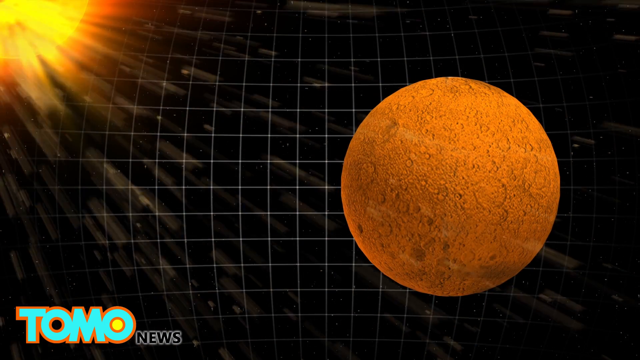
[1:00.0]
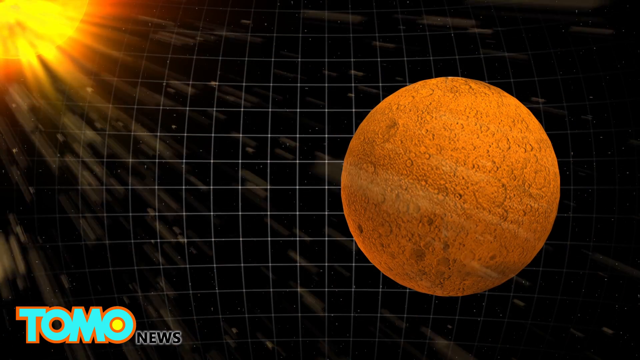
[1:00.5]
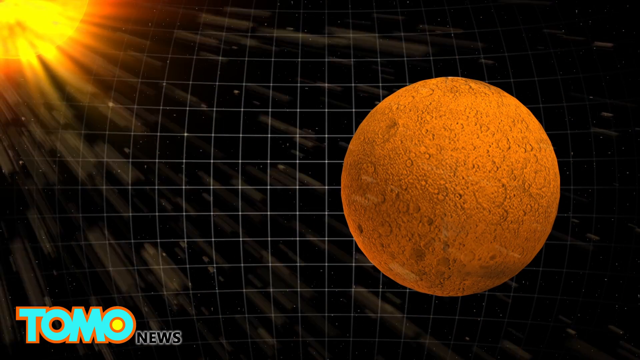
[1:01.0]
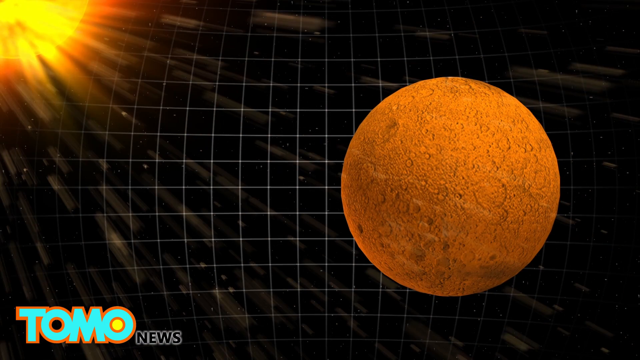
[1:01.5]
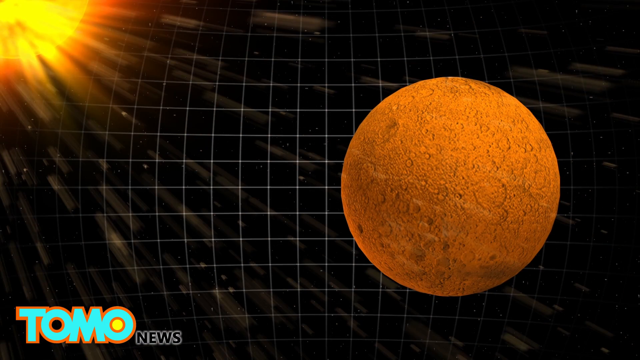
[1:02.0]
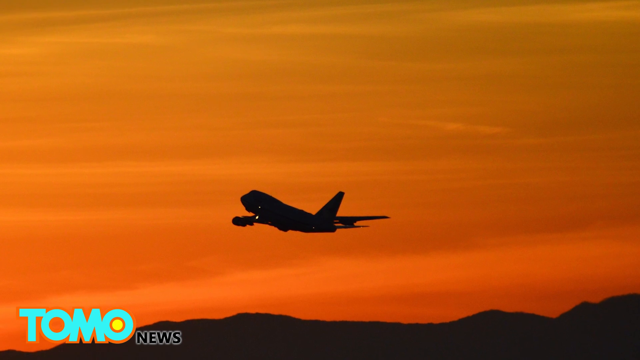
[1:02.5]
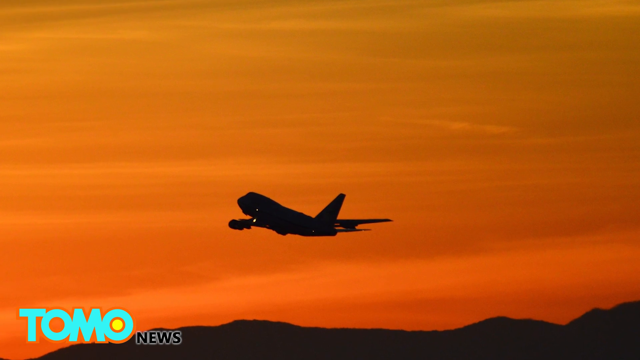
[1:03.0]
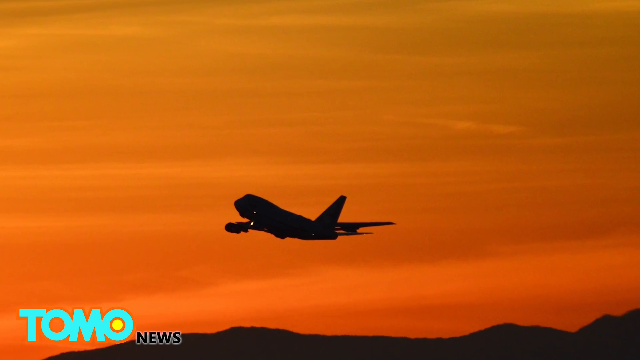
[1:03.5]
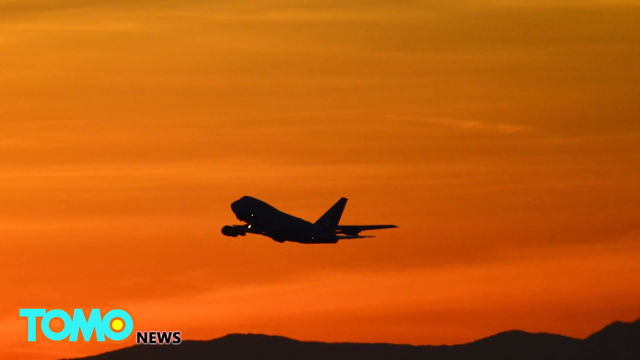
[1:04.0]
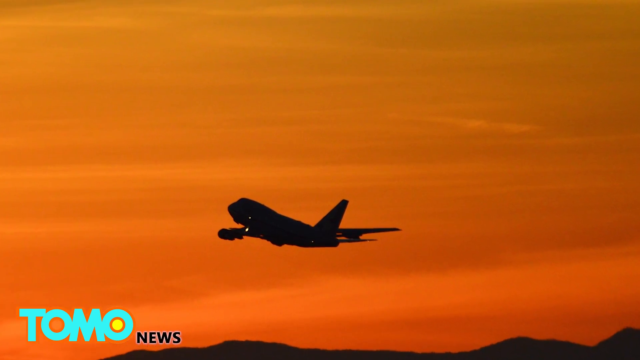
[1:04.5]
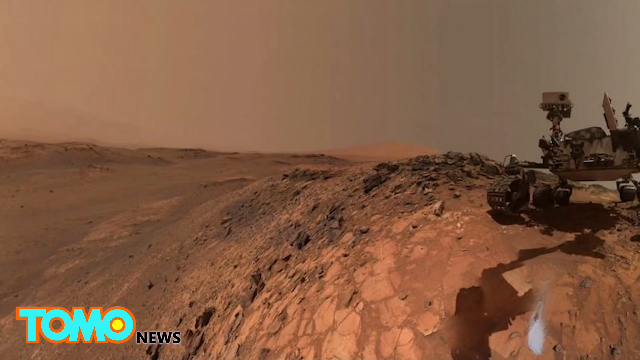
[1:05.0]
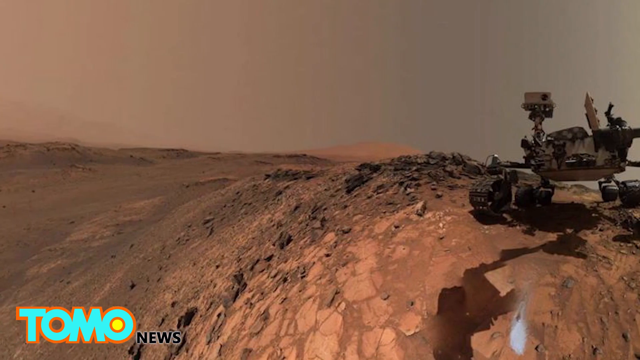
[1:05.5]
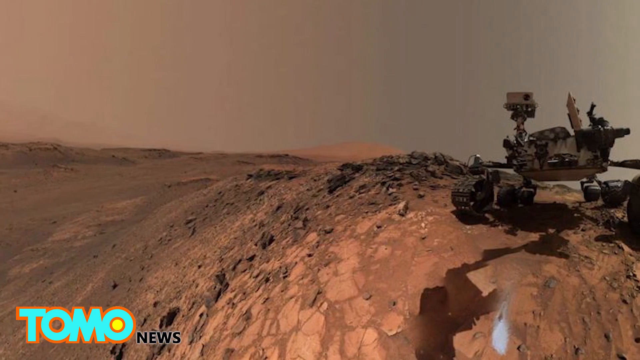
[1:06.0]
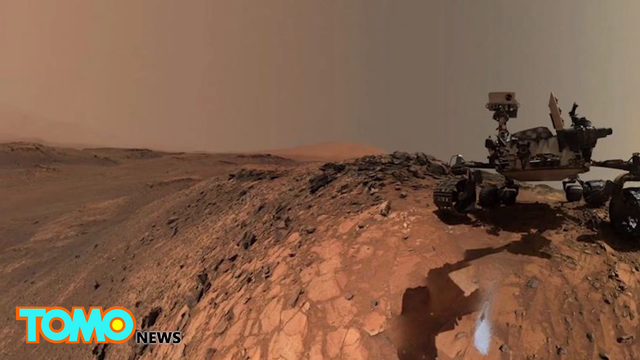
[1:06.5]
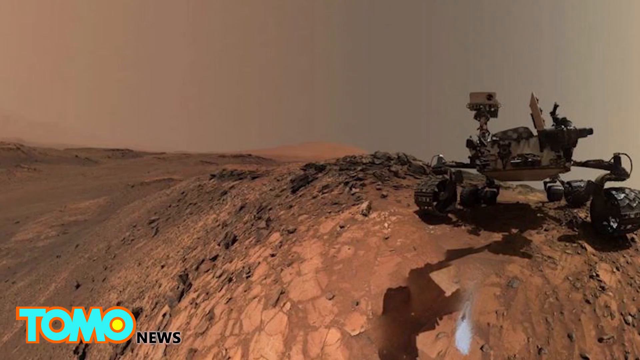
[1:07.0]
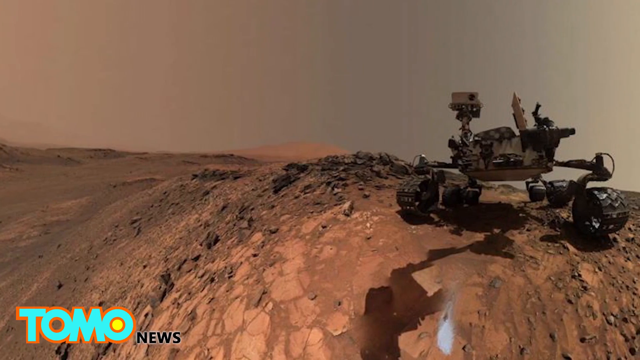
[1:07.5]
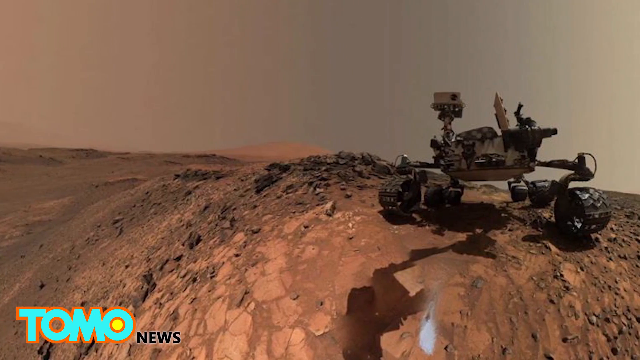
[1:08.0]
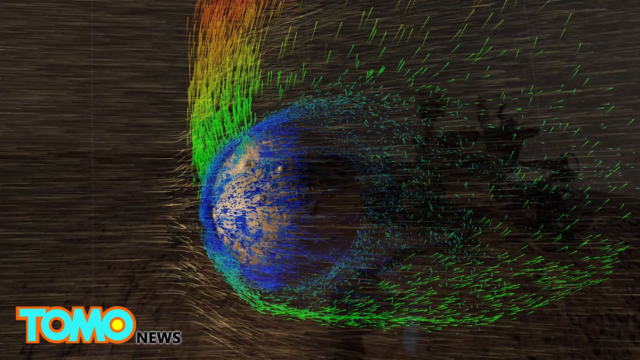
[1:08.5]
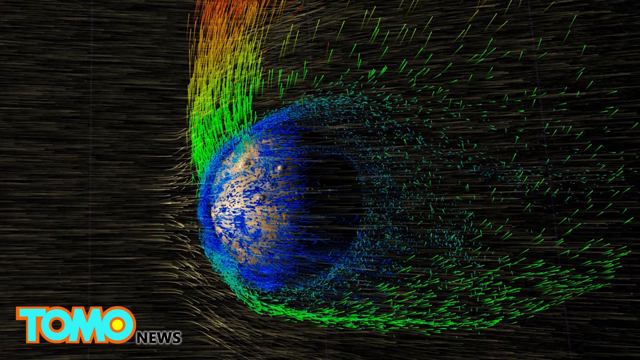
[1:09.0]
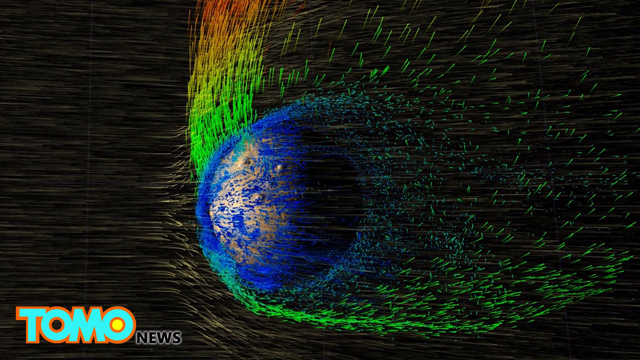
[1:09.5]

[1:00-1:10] A plane is shown along with the distance between the land and the path where the airplane lands, and two atmospheres are shown, with signals between them. Three lines in three colors show the distance between the airplane and the way it lands. On top, a circle changes color from yellow to blue, and behind it lines and the sun's rays are visible. The airplane moves down from higher up, trying to land.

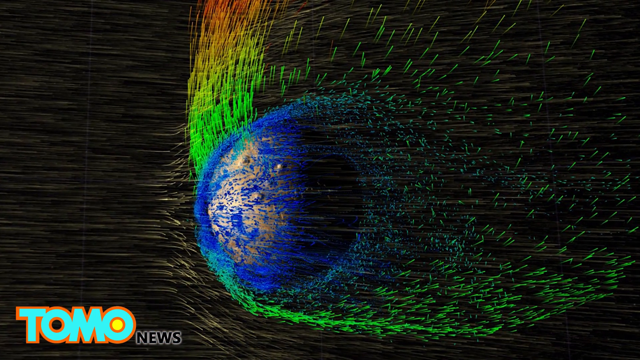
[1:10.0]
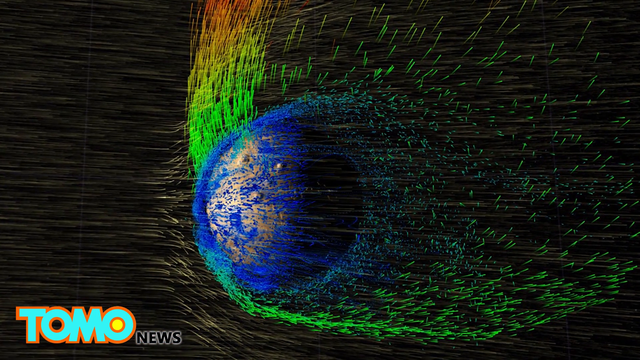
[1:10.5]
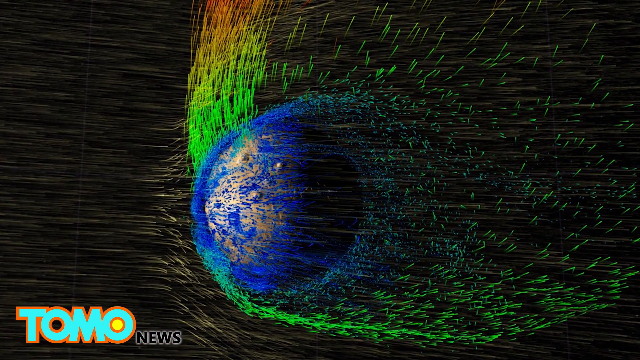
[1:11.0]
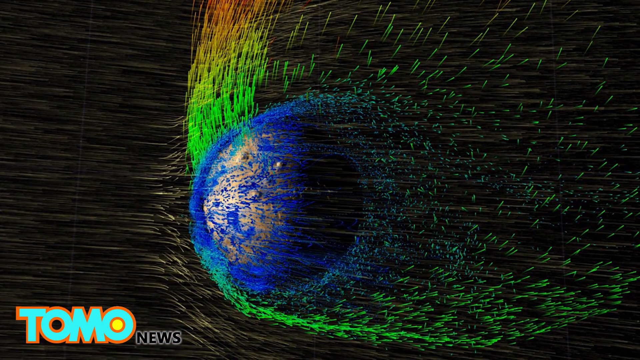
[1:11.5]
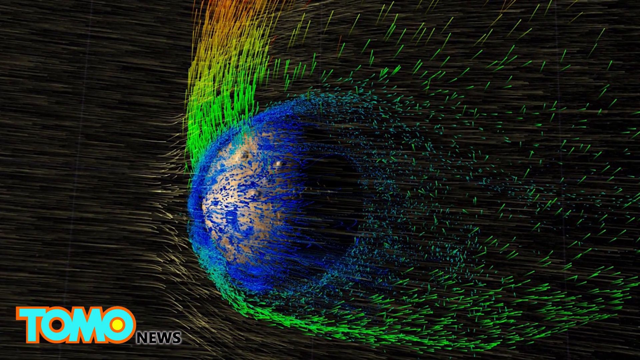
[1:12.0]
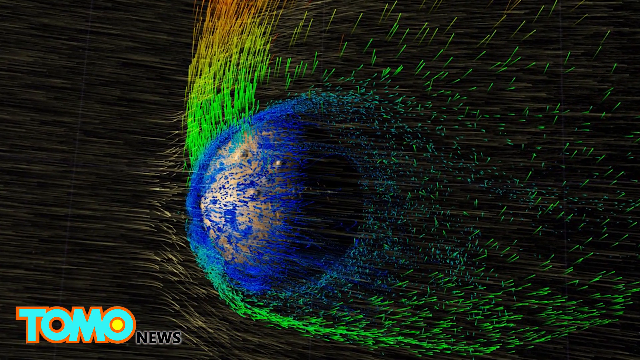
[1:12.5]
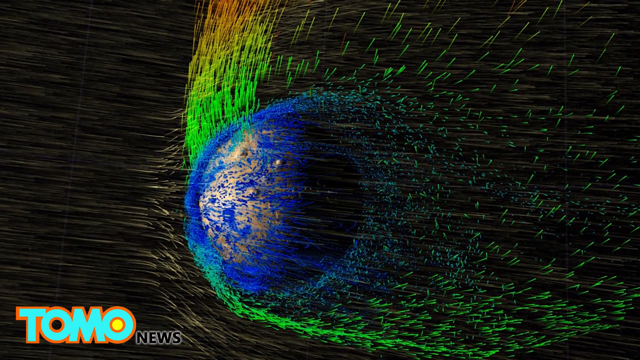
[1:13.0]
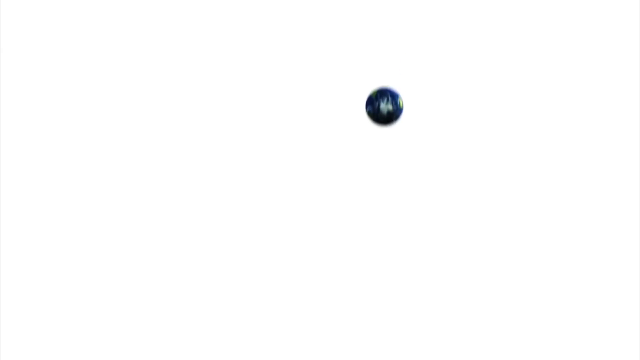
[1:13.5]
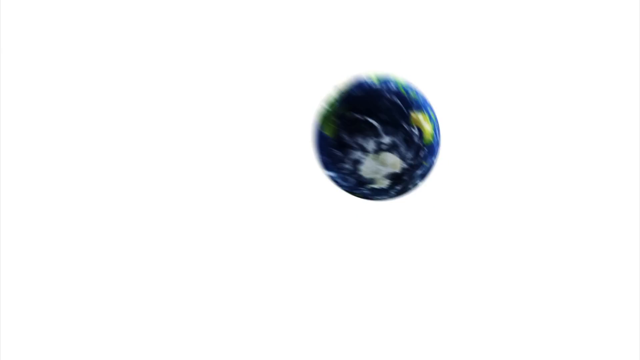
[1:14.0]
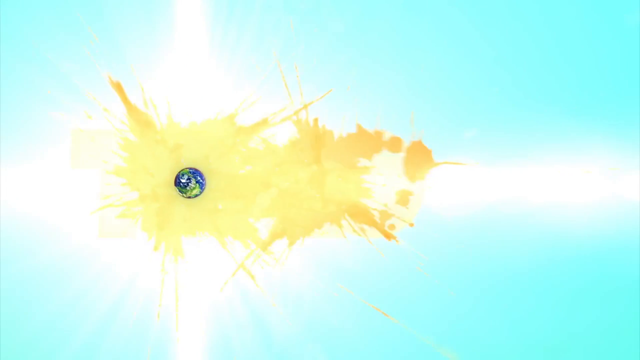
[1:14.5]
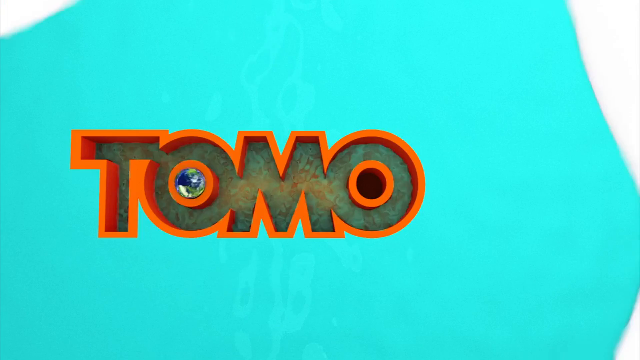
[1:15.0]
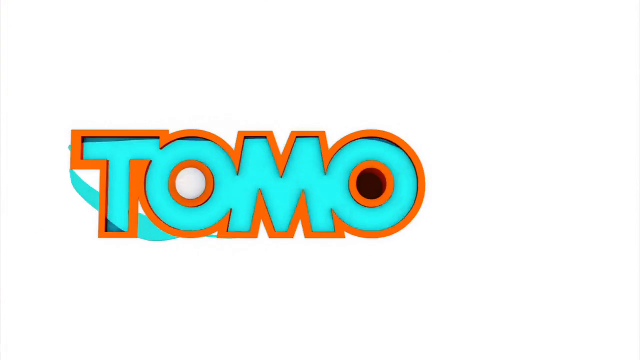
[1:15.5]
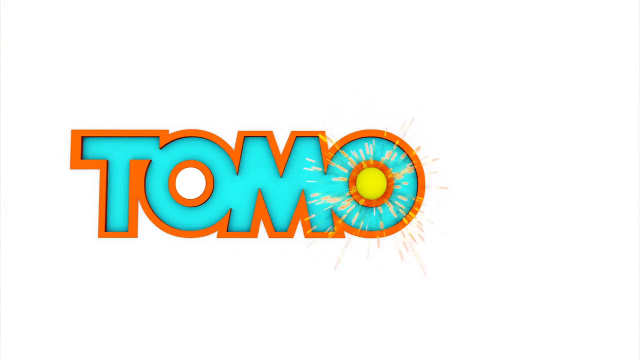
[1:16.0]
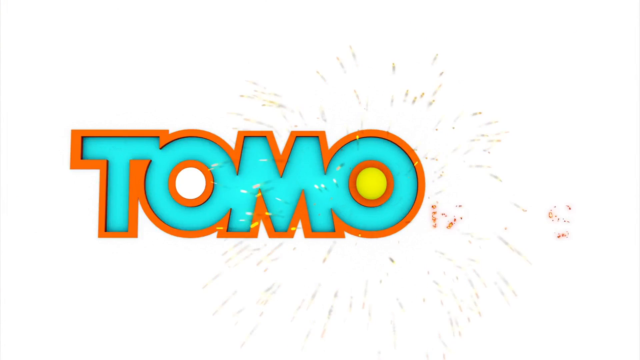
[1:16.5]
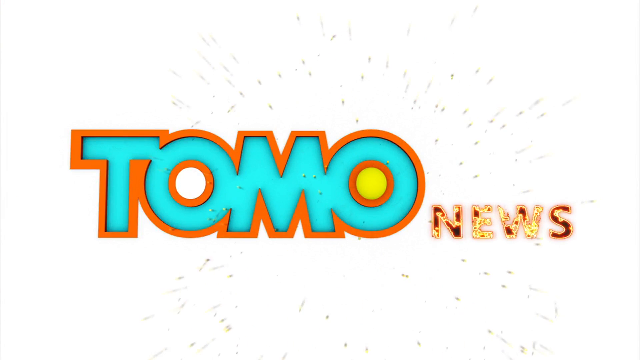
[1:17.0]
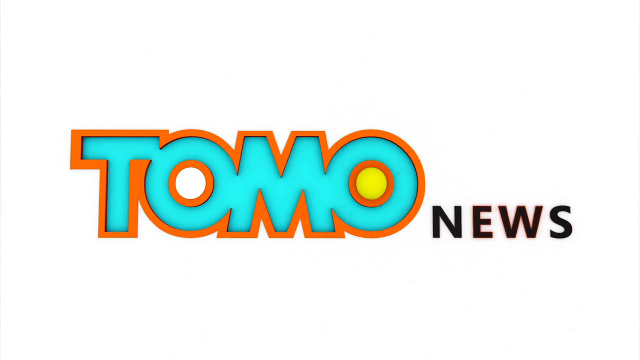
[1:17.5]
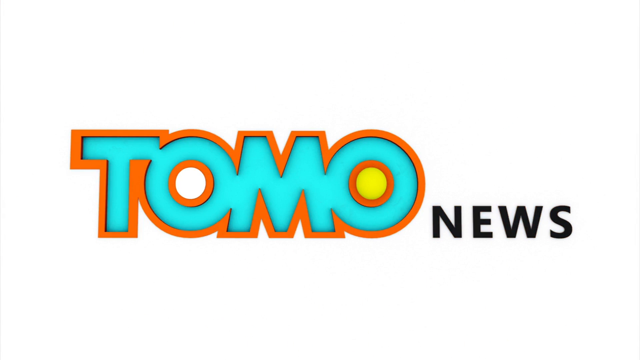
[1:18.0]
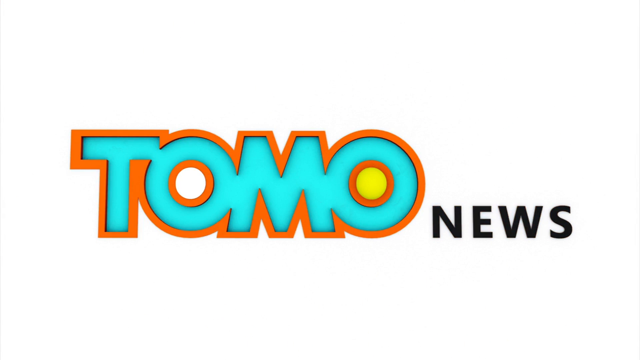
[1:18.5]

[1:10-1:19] The atmosphere is shown, with NASA lettering at the top left. A lady looking up into the air is shown. The plane moves, and the distance between the landing point and where the plane moves is shown as the airplane moves from one hemisphere to the other. An orange element is visible. The shape changes from yellow to blue, and something like a sun rises toward it, shining, and the other side is shown. The plane is shown.